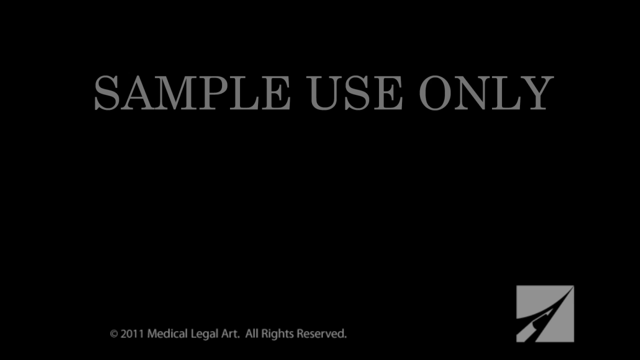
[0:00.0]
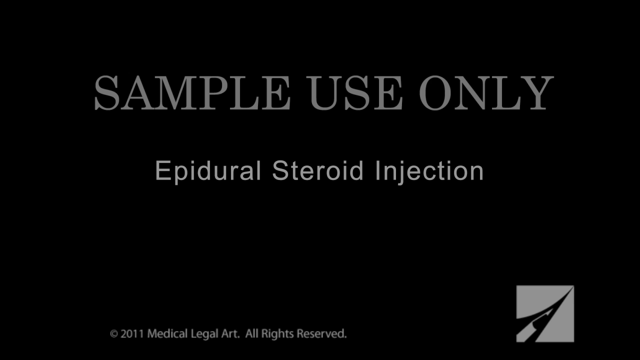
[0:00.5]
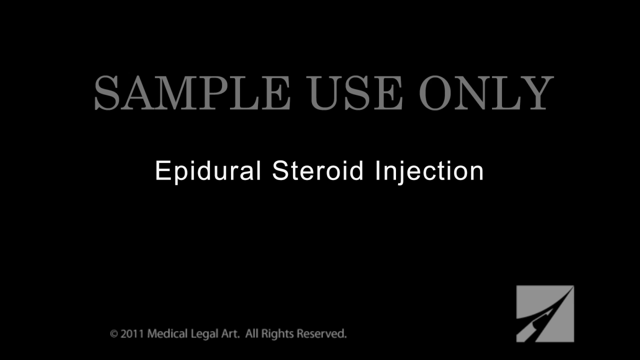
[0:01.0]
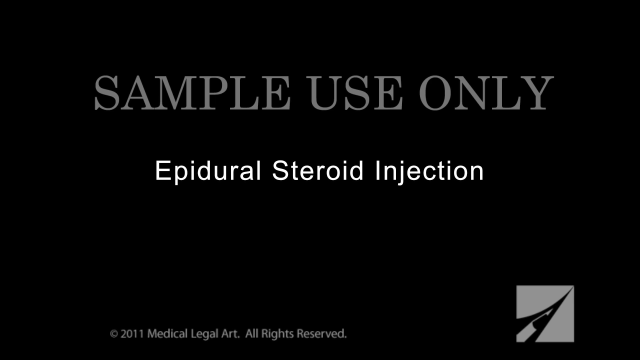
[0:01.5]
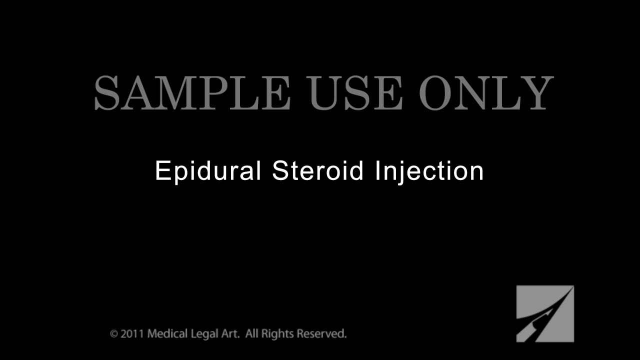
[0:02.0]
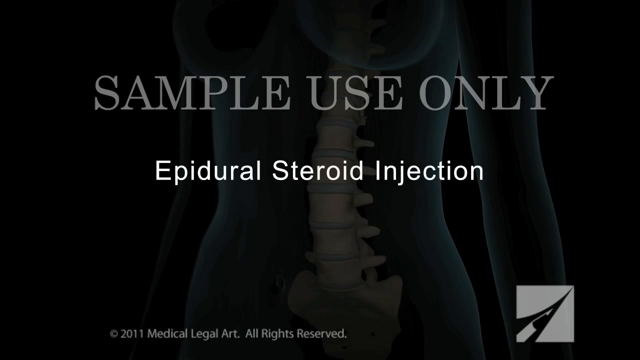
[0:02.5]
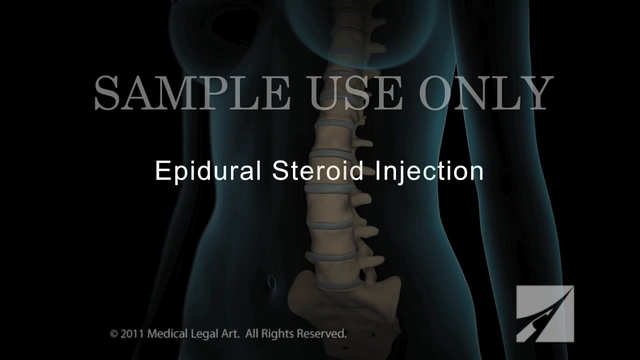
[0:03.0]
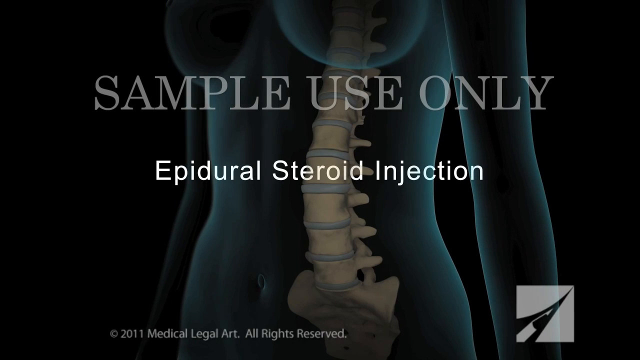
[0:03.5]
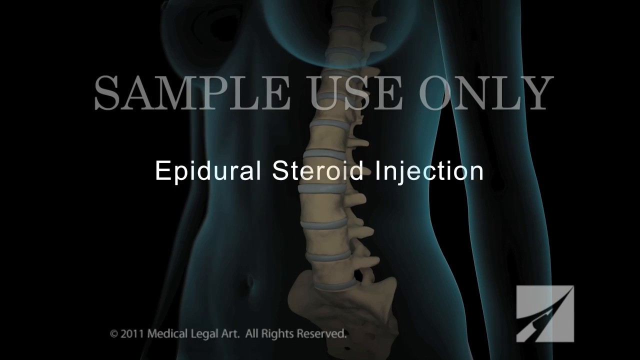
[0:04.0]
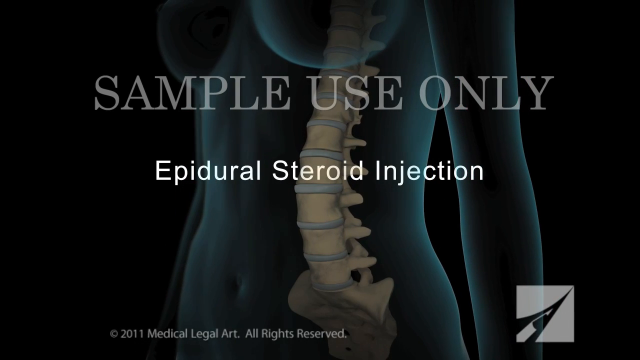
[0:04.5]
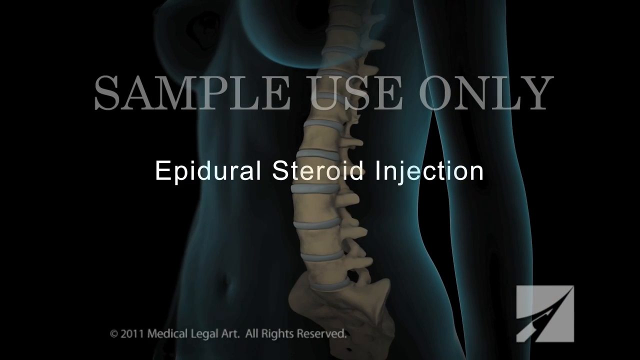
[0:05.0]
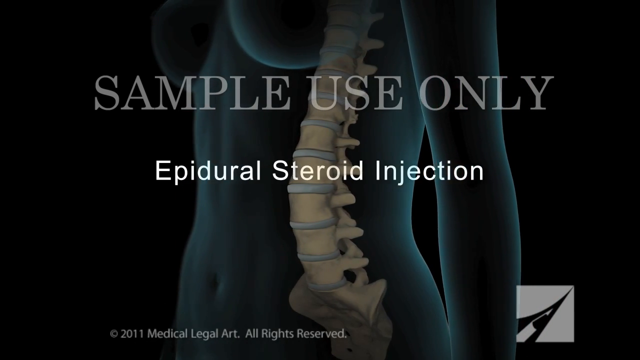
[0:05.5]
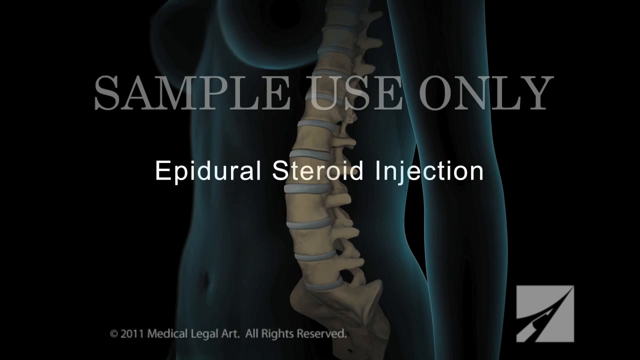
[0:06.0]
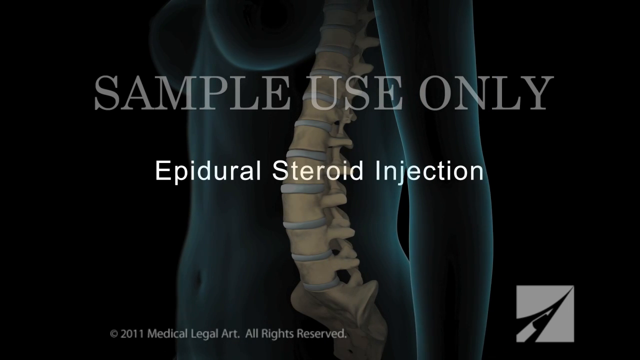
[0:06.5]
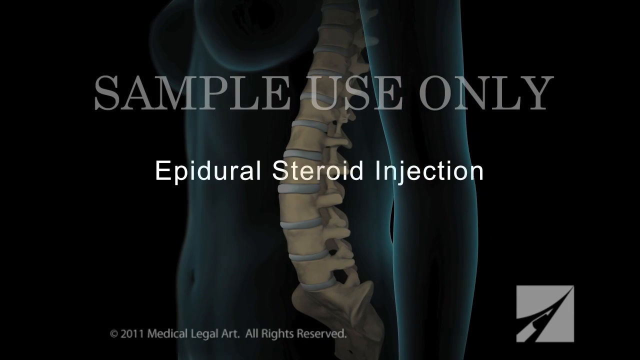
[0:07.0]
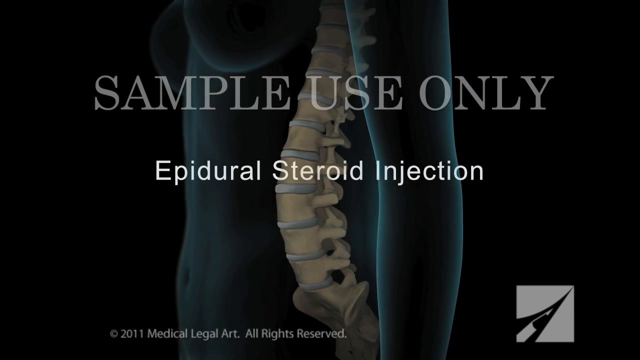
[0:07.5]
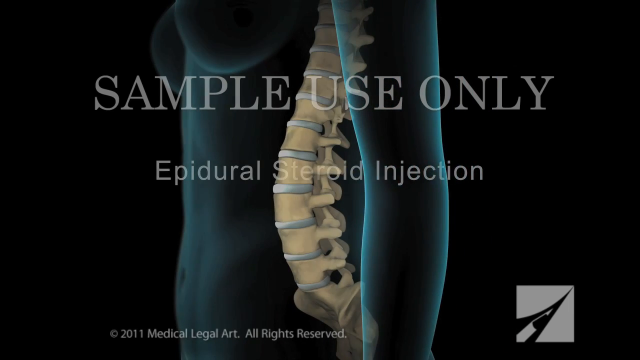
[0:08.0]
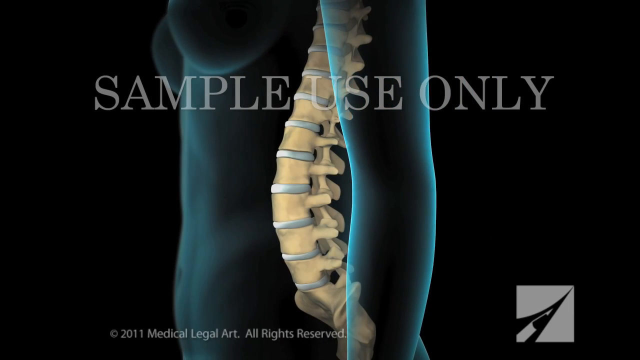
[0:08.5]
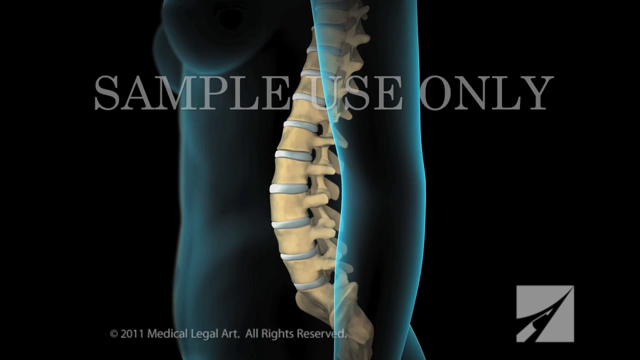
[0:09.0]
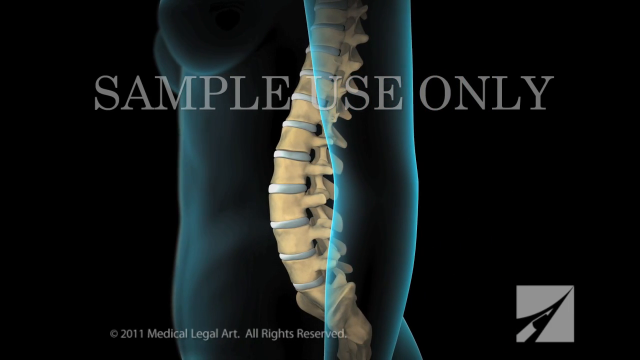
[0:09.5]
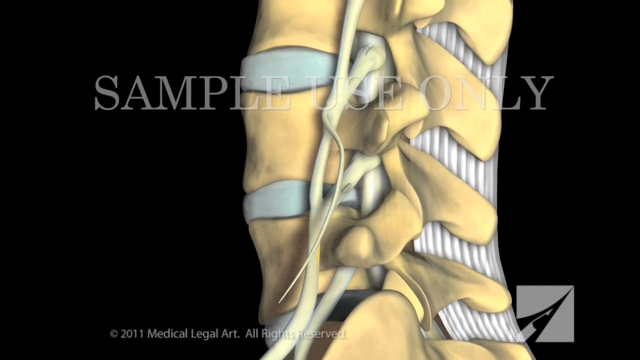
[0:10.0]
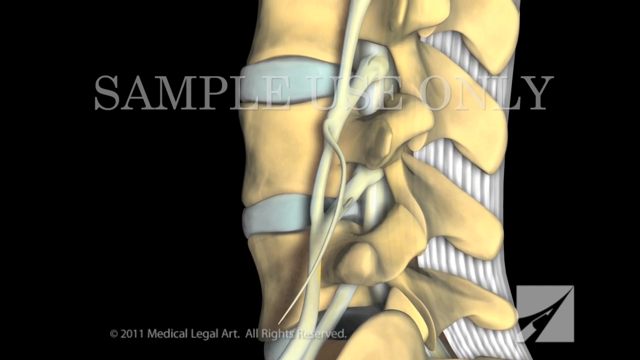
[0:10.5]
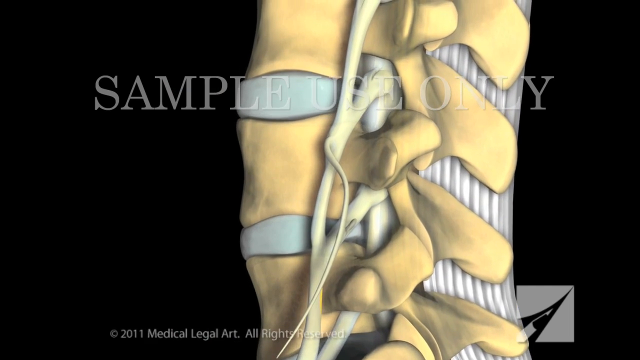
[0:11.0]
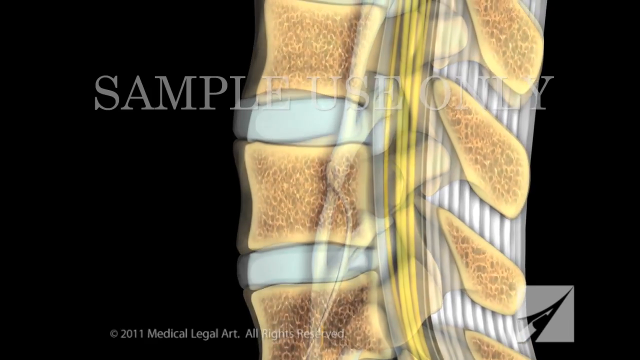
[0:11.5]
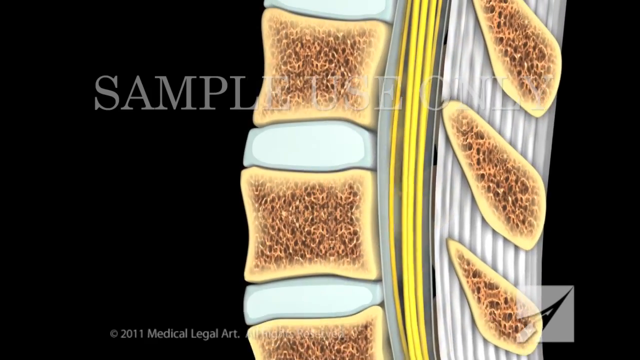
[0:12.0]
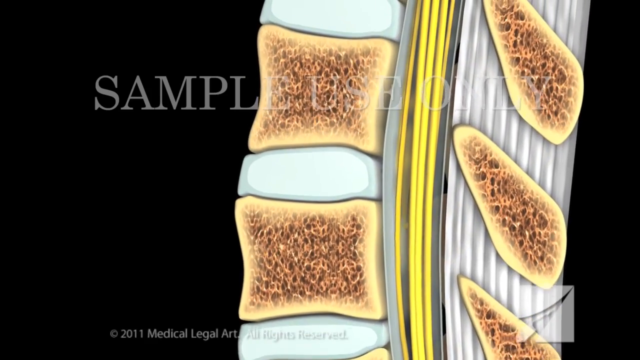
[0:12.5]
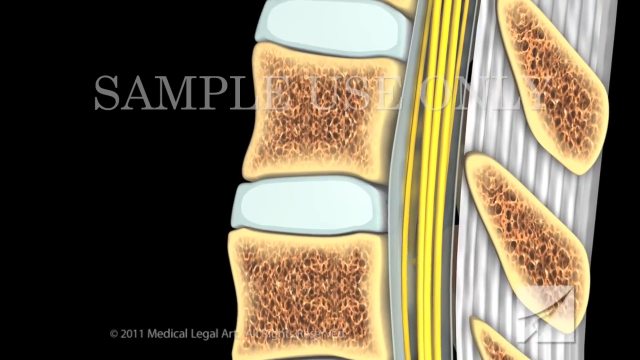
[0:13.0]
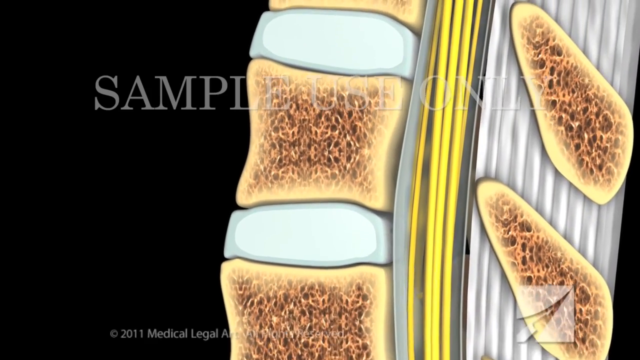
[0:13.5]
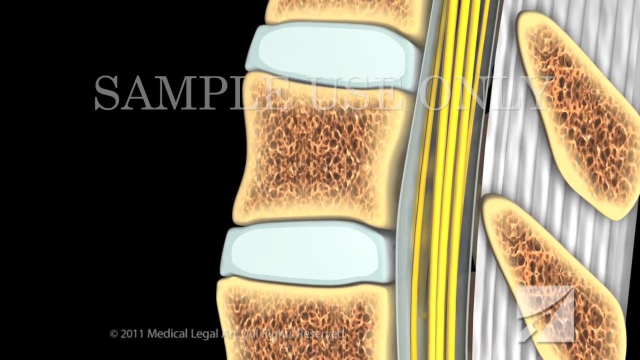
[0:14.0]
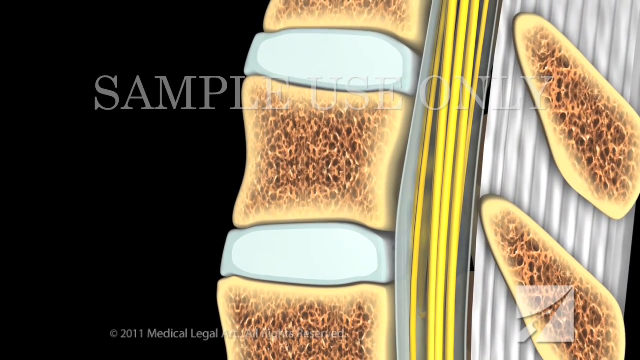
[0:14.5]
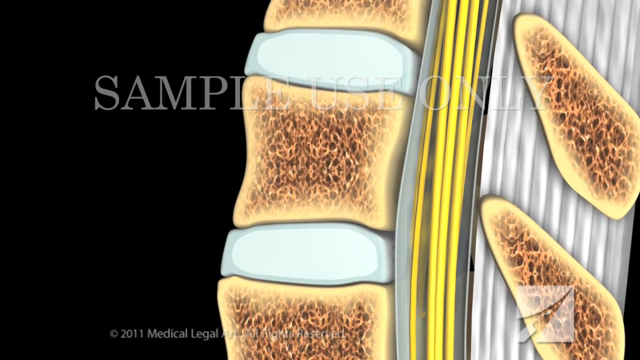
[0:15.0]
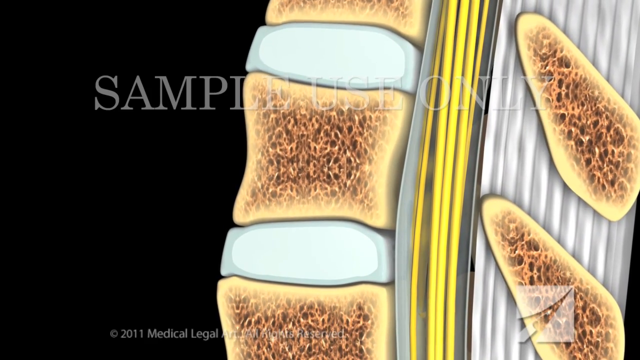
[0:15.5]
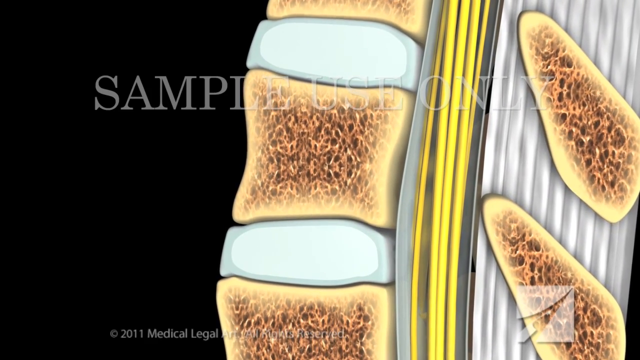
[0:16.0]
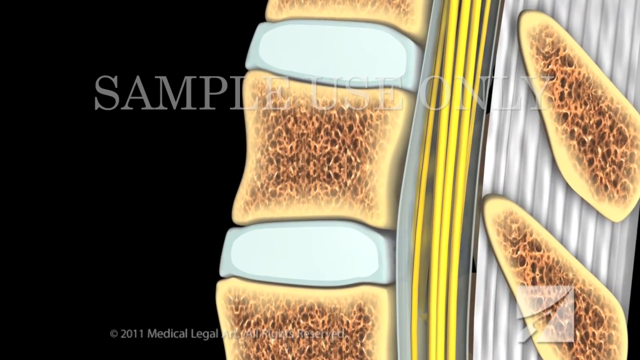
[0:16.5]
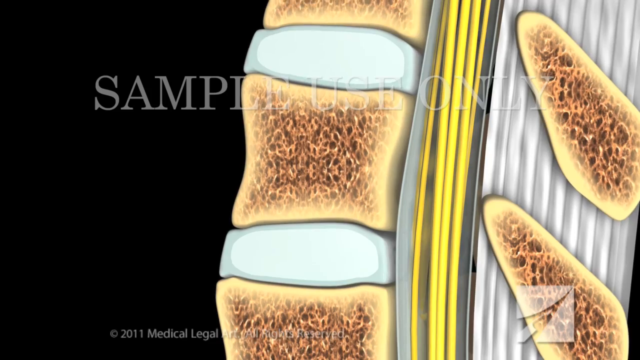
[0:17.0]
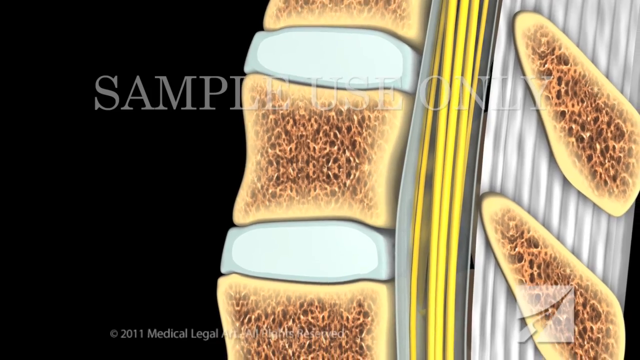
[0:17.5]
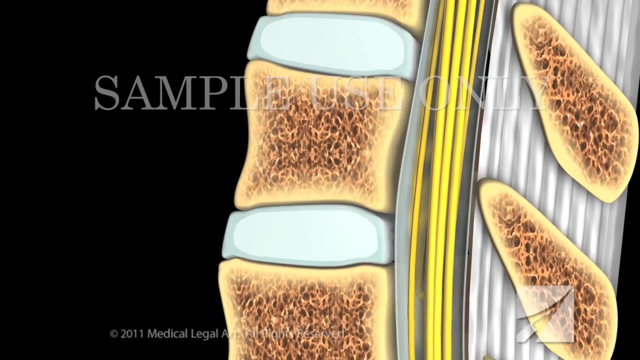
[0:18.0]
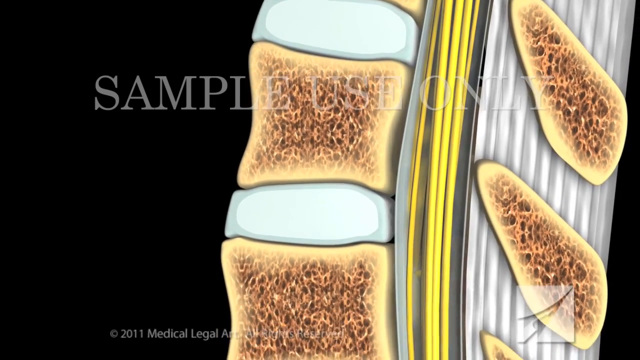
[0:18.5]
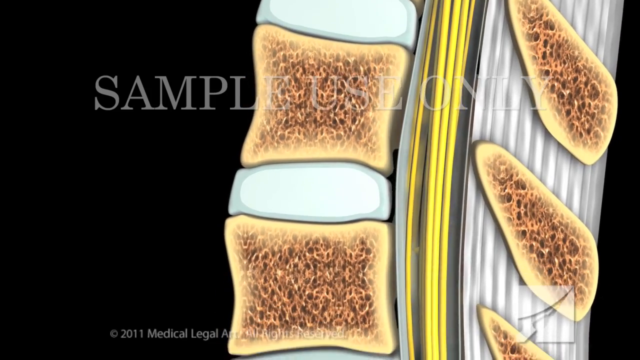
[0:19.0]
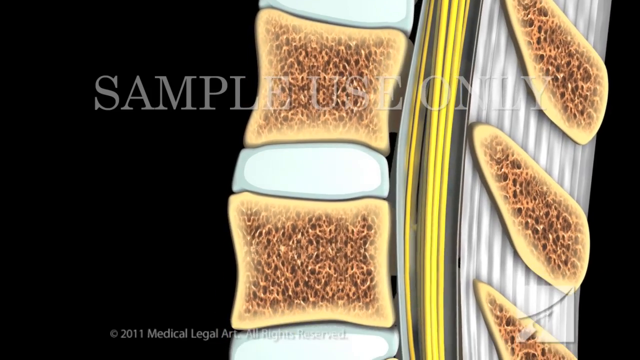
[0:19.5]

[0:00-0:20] On a black background, gray text reads "sample use only," and beneath it white text reads "epidural steroid injection." A translucent female body appears, shown from mid-breast down to just below the belly button, primarily the torso. Some of the right arm is visible on the left side and most of the left arm on the right side. A large white spinal column inside the torso shows the various vertebrae as the view slowly pans from facing the center over to the left side, continuing until it completely faces the left. A side view of the spinal column with individual vertebrae follows. Over the vertebrae, gray text reading "sample use only" looks somewhat like a watermark; it covers the whole video and stays superimposed on the image. Nerves run between the vertebrae, and there is cushioning between each vertebra. As the view gets closer, it shows the insides of the vertebrae and the filling inside the bones, which is spongy and light brown; it moves and looks somewhat squishy. The background is black. The spinal column is off-white, the cushioning tissue between the vertebrae is white, and the vertebrae themselves are cream, with spongy-looking insides in a mixture of the cream tone and light brown. Nerve fibers run between the vertebrae and their edges, which point toward the back, to the right side of the image. The view scrolls in closer to the vertebra tissue and the insulating tissue between the vertebrae. What appear to be nerve fibers run vertically; they are yellow, with approximately five or six visible and more implied. The spine appears to flex up and down. The view pans in toward it, then begins to pan out away from the vertebrae, and fades back to black.